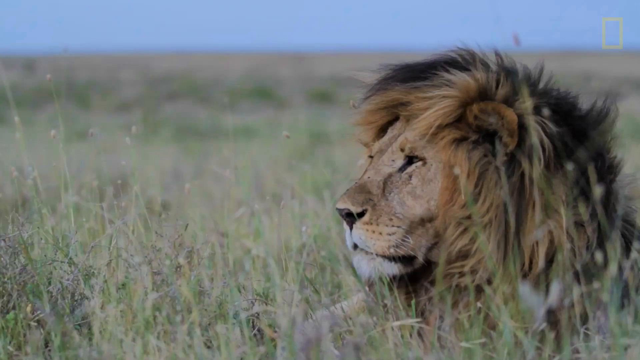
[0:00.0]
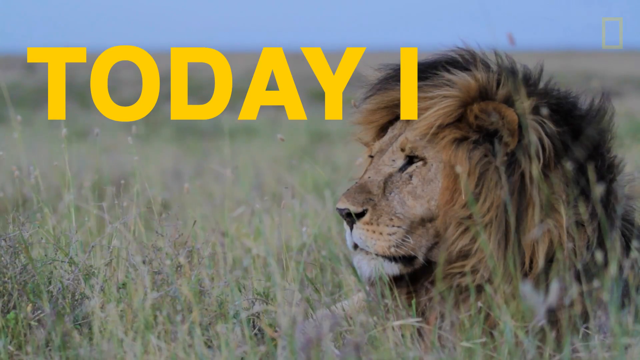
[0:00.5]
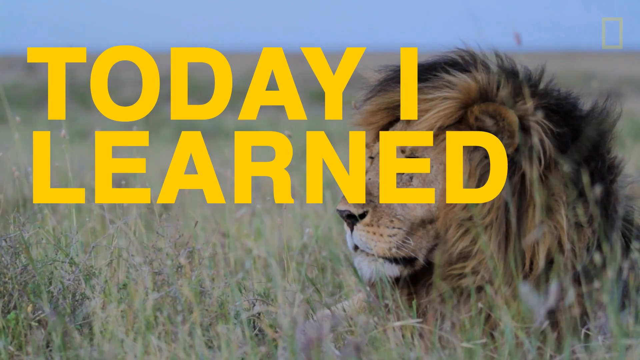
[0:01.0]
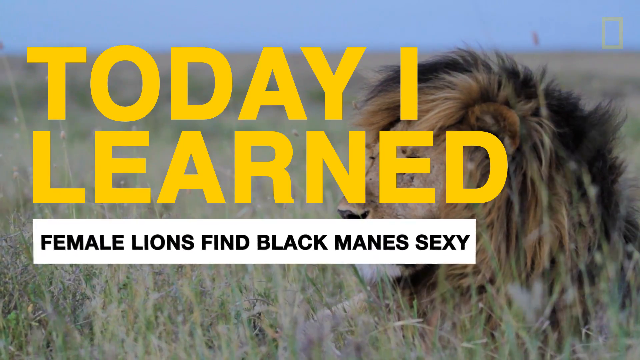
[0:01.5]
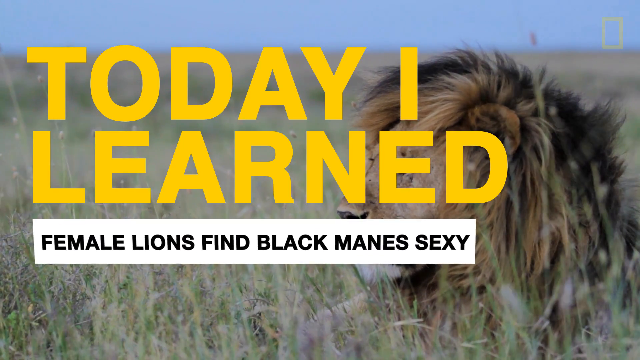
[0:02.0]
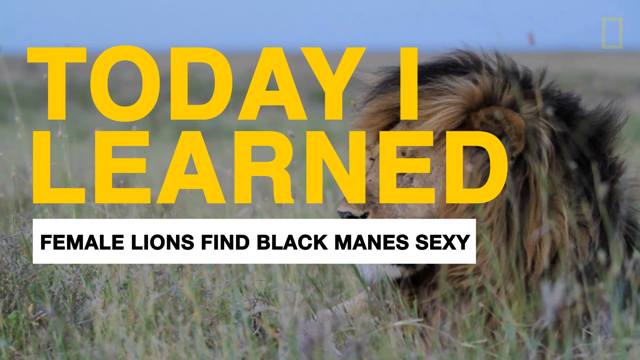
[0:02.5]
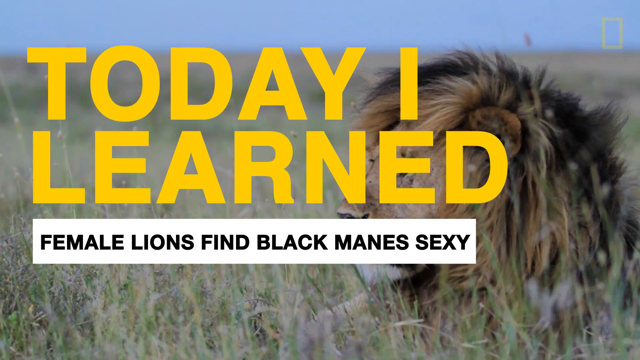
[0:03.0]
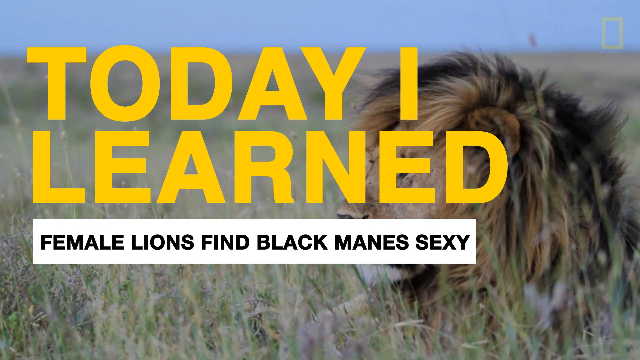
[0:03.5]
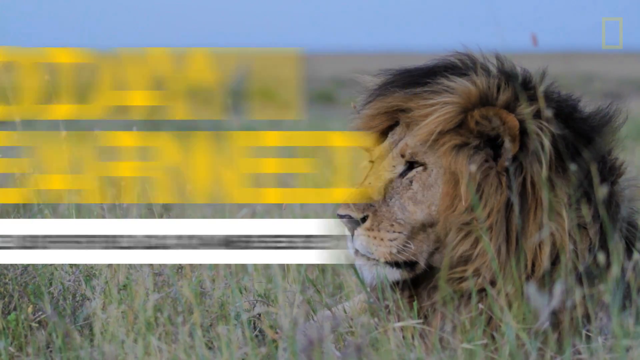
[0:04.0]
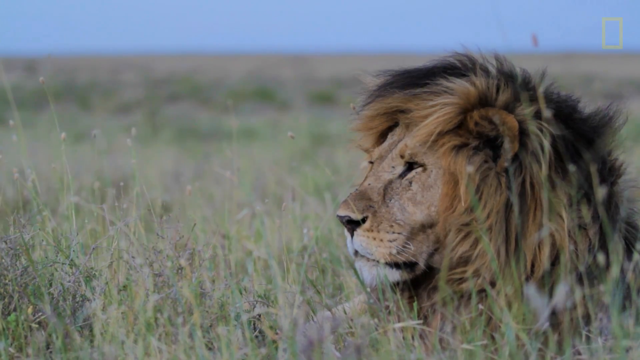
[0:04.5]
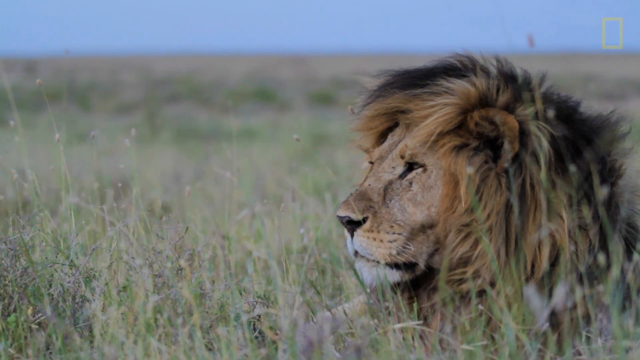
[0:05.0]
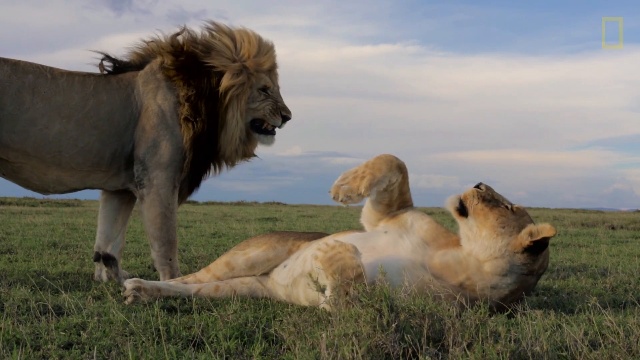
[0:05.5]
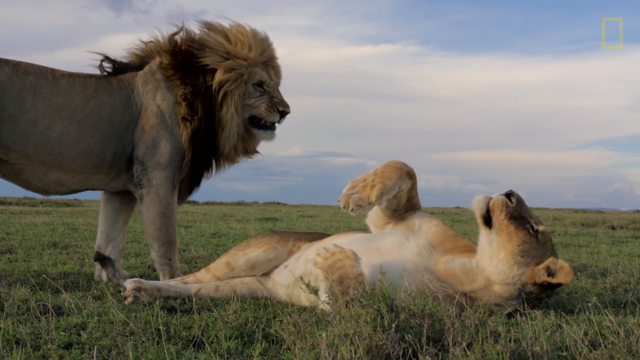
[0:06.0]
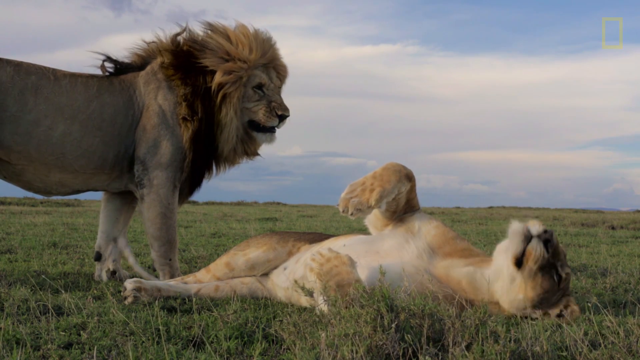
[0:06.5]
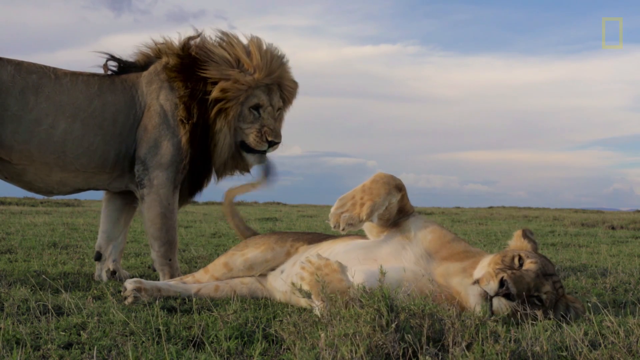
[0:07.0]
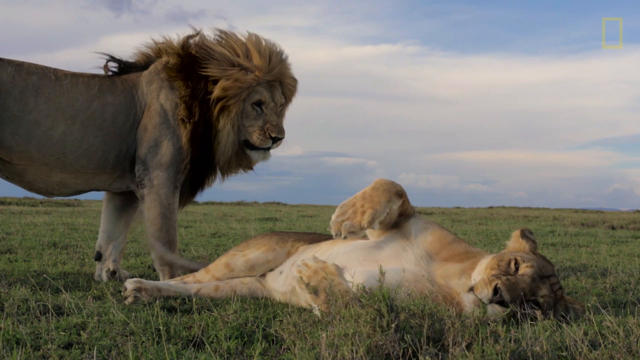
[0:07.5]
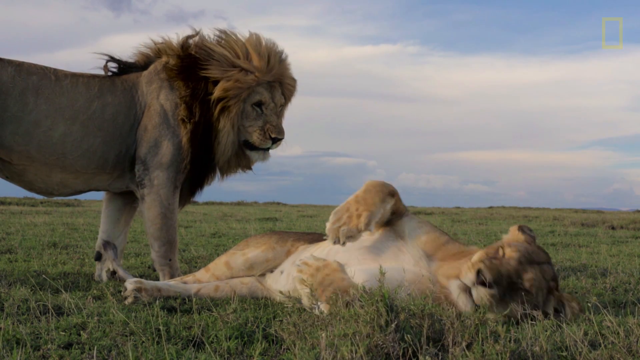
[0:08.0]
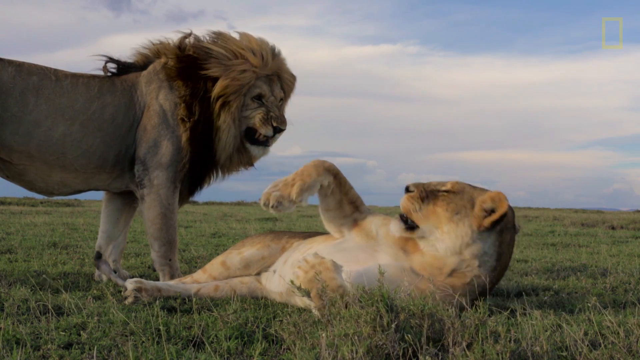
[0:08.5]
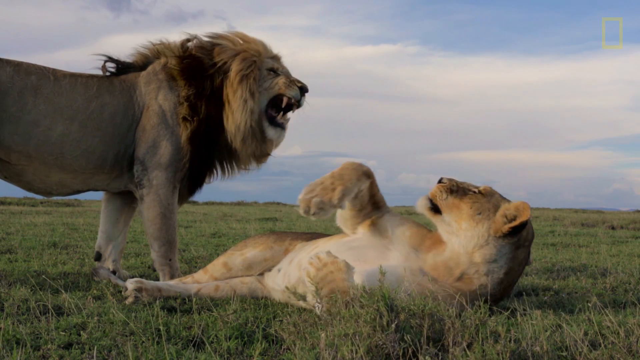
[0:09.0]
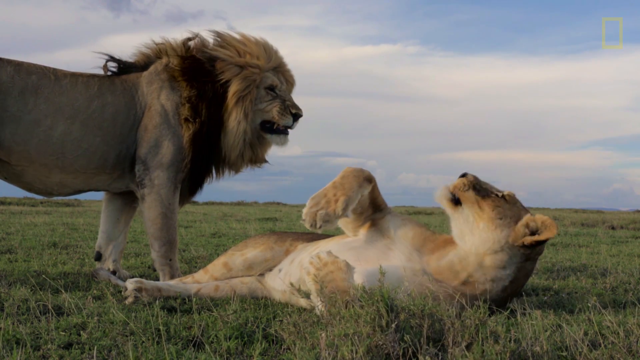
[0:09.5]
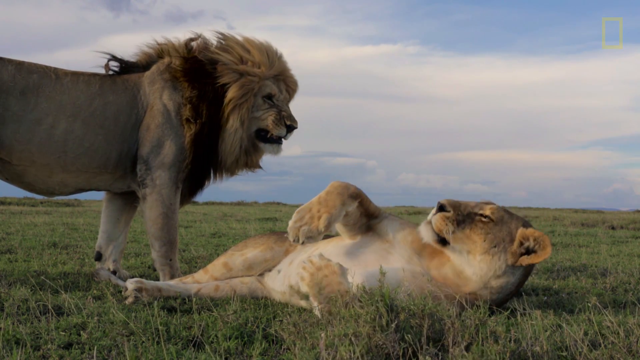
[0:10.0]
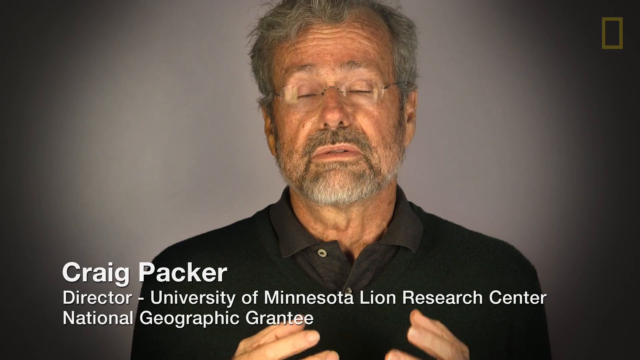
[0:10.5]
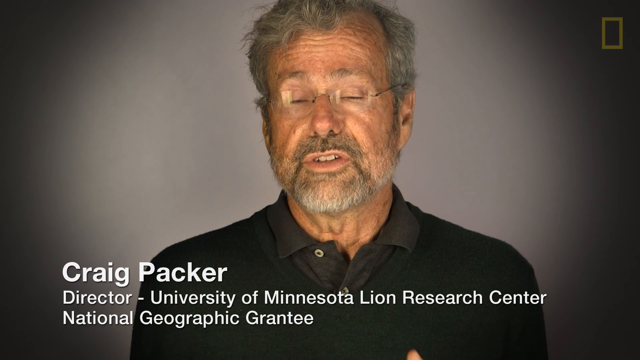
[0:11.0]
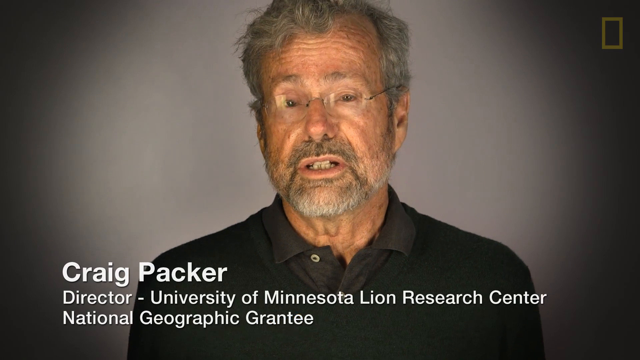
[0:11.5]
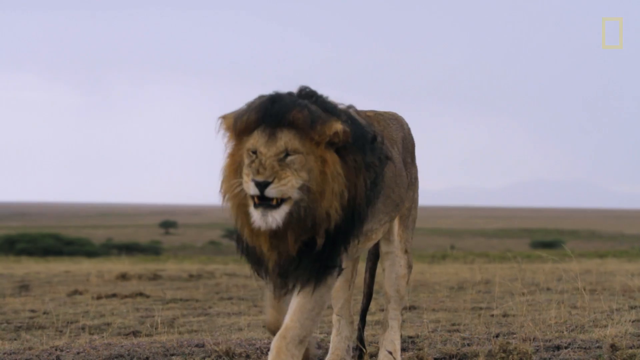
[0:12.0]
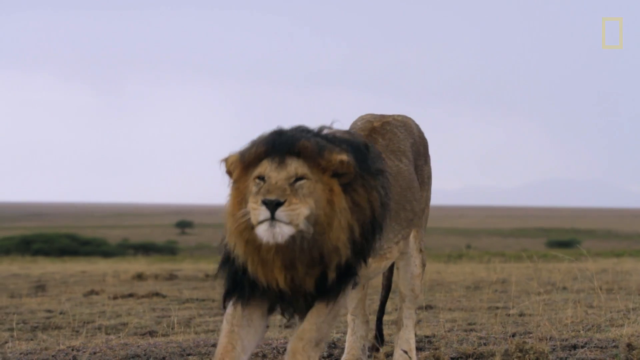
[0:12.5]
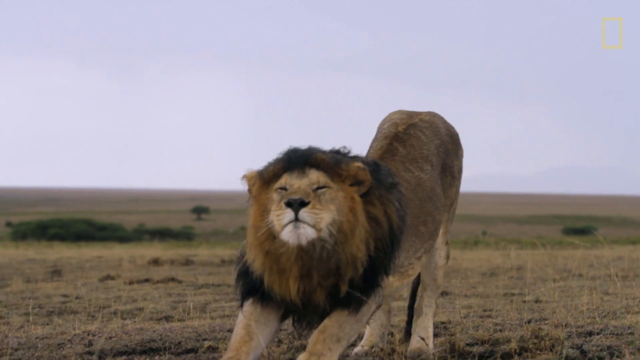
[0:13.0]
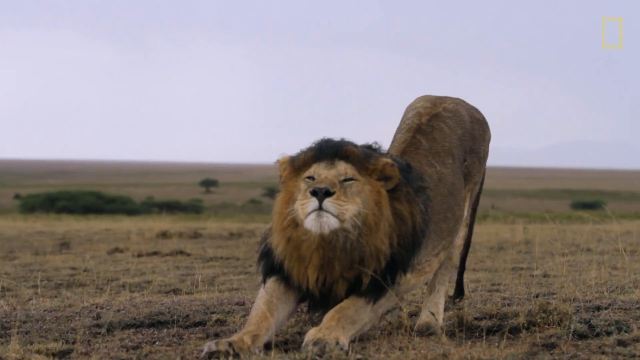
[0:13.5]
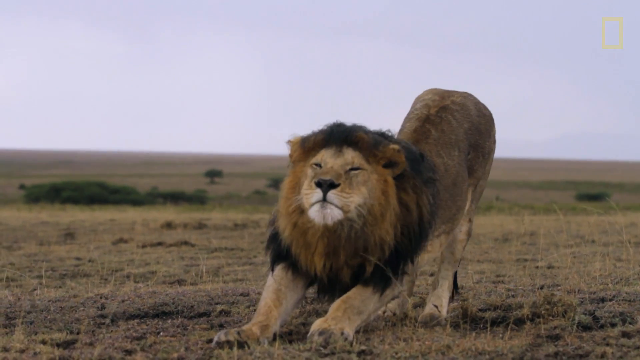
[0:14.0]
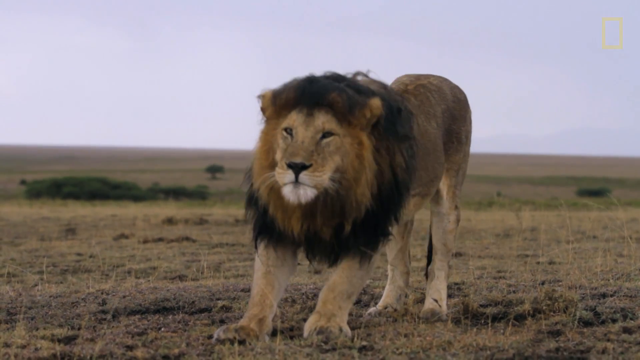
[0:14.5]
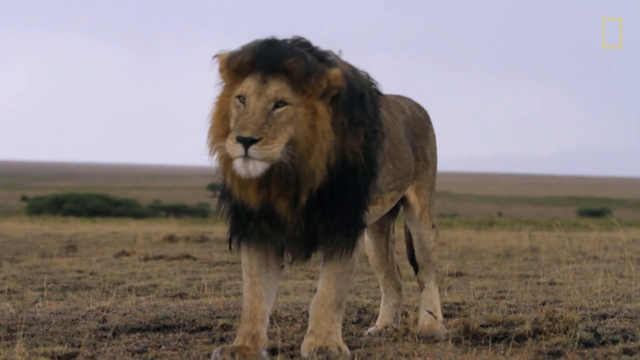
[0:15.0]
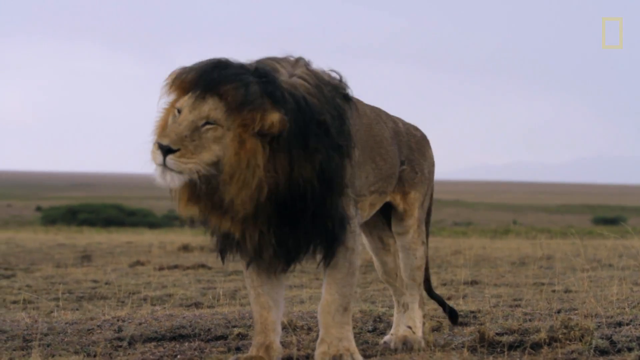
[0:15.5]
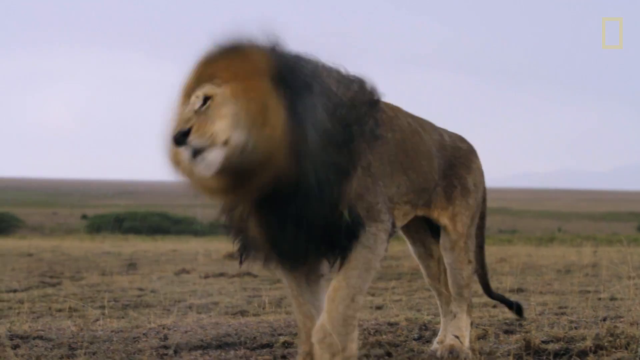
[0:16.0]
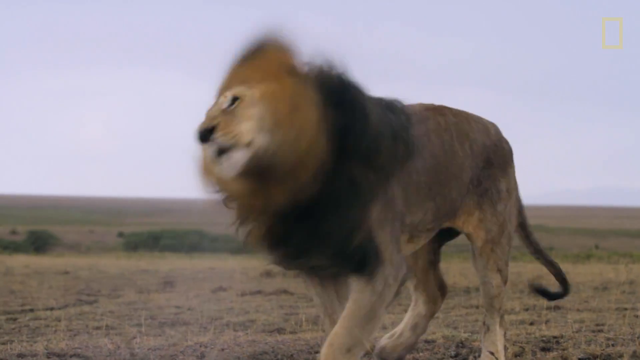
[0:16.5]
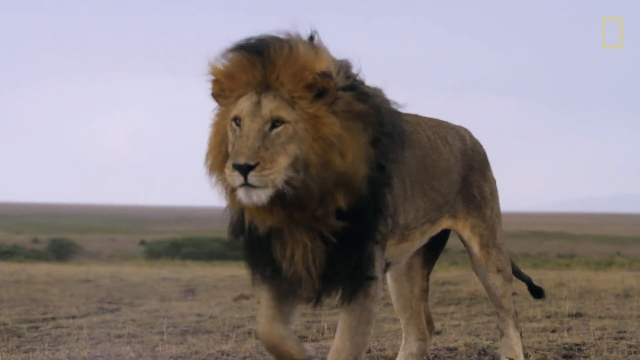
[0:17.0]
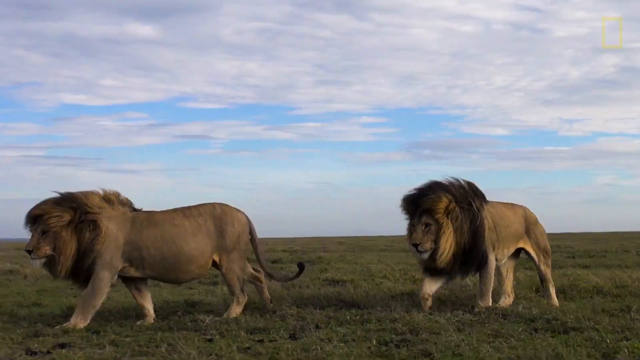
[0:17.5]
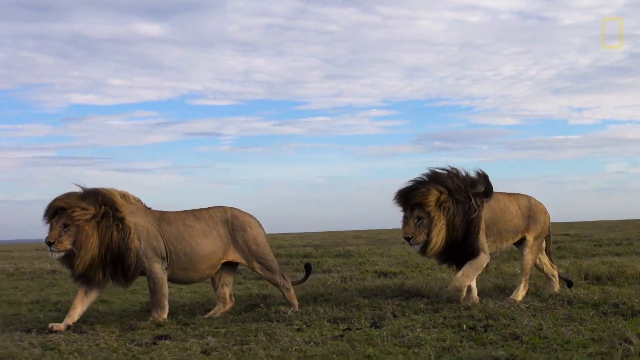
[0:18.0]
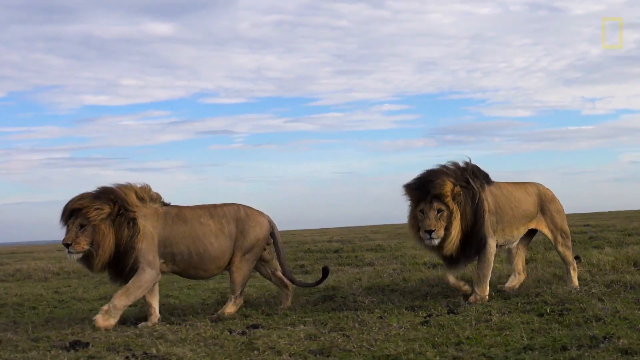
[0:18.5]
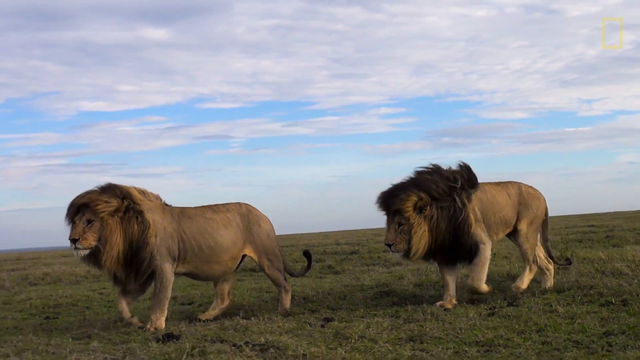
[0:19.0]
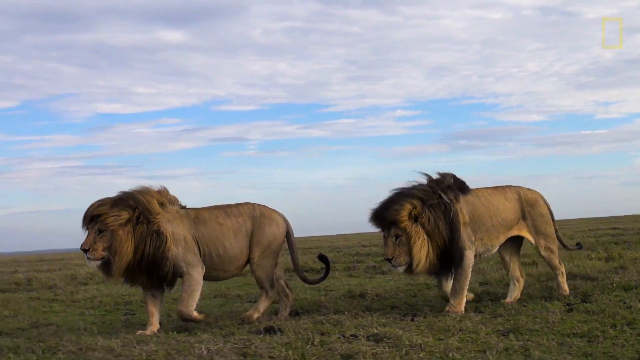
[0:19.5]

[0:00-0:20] The video opens with yellow text reading "Today I Learned" and, underneath, black text reading "Female Lions Find Black Manes Sexy." A picture shows a male lion sitting in the grass, looking sexy, and then it switches to a picture of a male lion kind of hovering over a female lion that is on her back, acting playful toward him. Next, a man is shown talking, identified by white text on the screen as Craig Packer, the director of Minnesota Lion Research Center at the National Geographic Grantee; he seems to be an expert.